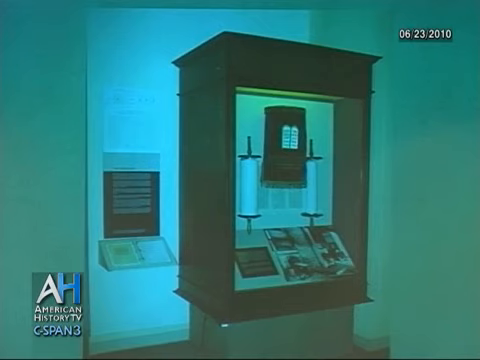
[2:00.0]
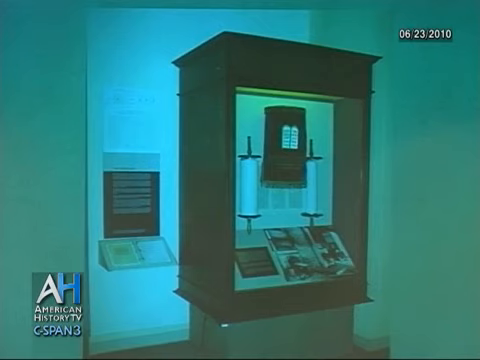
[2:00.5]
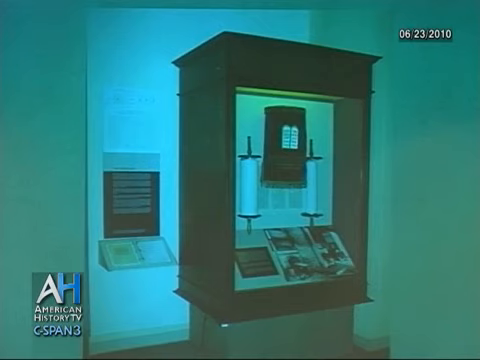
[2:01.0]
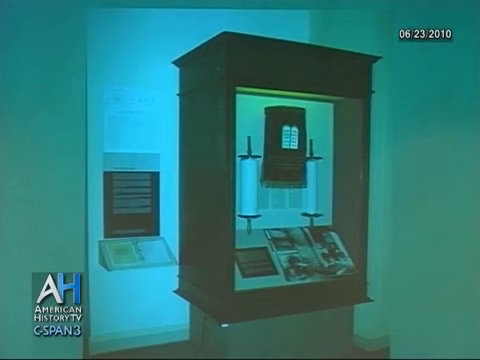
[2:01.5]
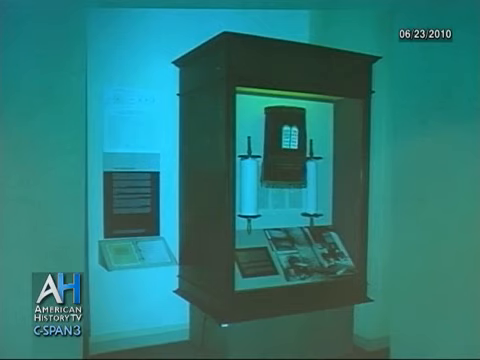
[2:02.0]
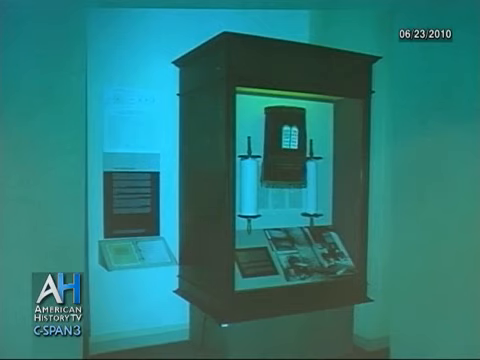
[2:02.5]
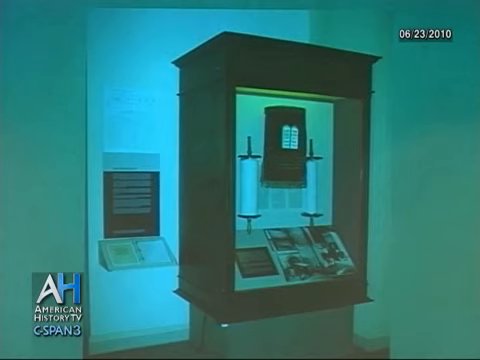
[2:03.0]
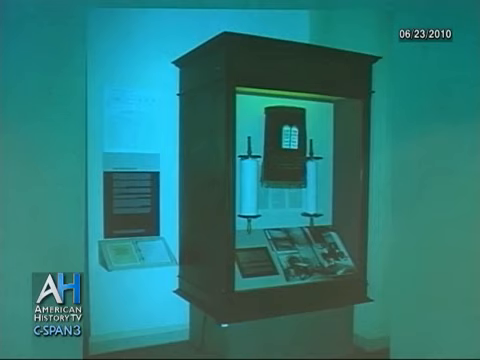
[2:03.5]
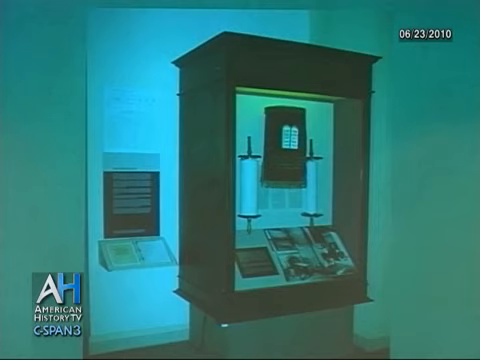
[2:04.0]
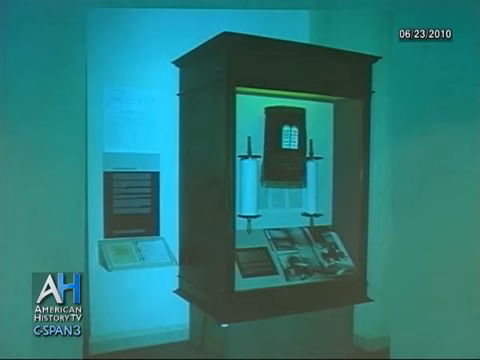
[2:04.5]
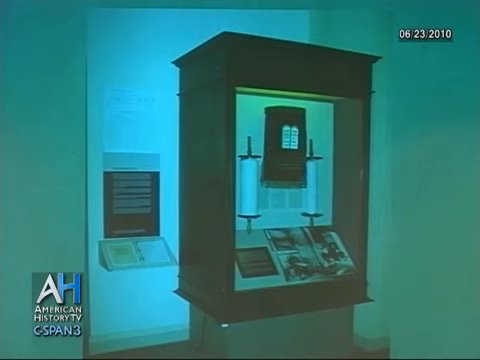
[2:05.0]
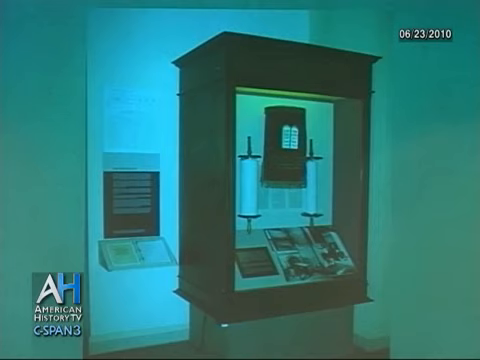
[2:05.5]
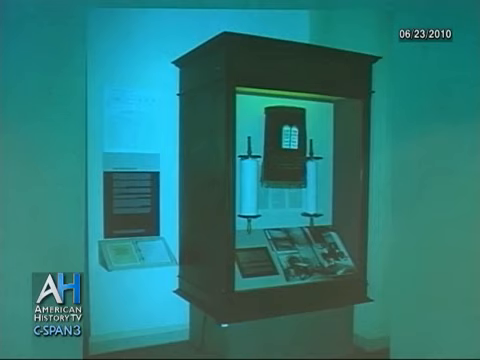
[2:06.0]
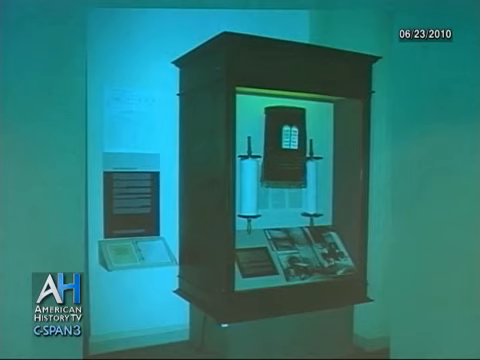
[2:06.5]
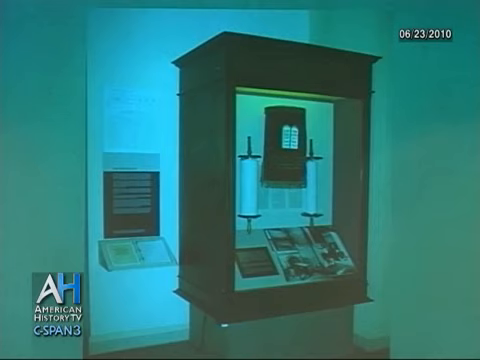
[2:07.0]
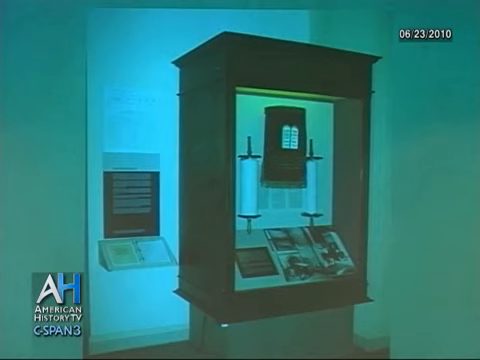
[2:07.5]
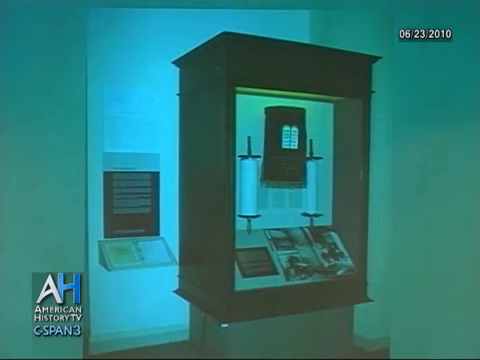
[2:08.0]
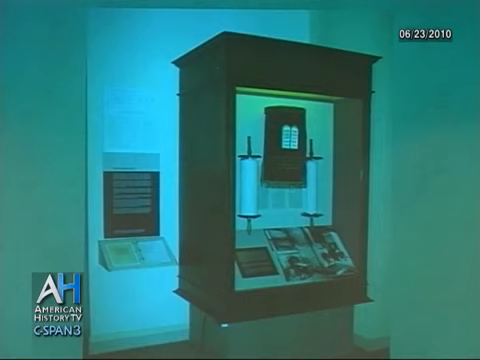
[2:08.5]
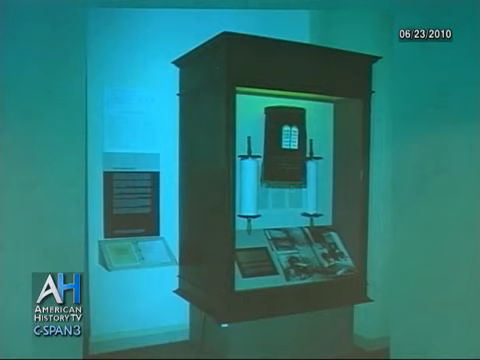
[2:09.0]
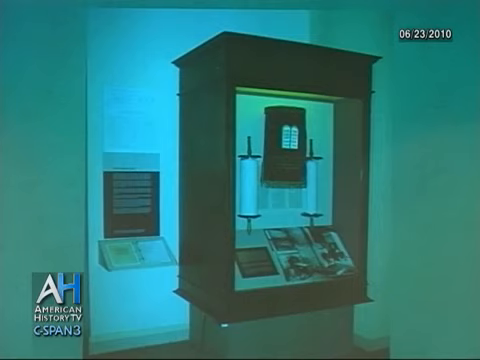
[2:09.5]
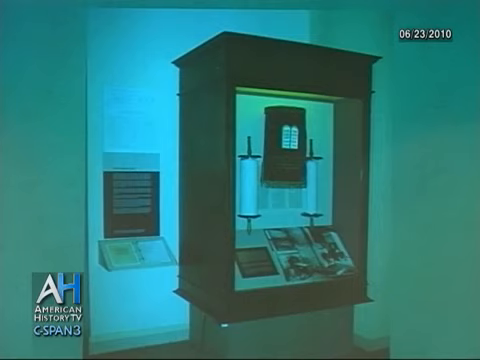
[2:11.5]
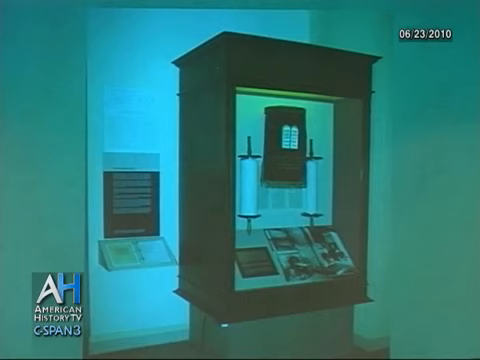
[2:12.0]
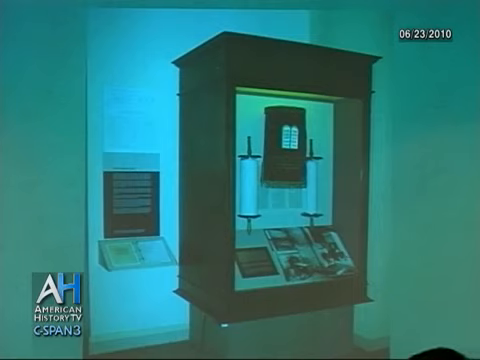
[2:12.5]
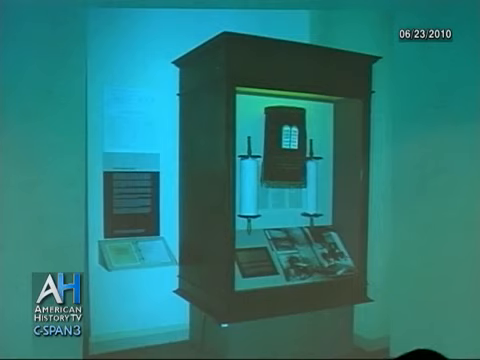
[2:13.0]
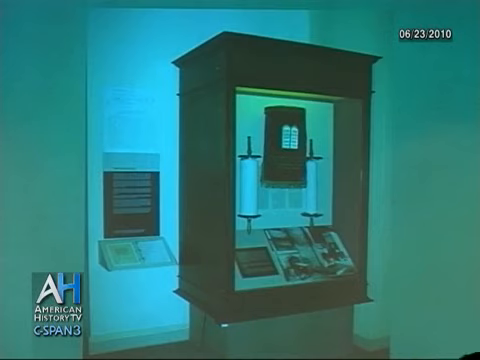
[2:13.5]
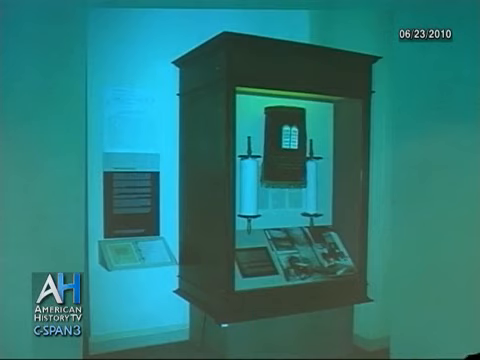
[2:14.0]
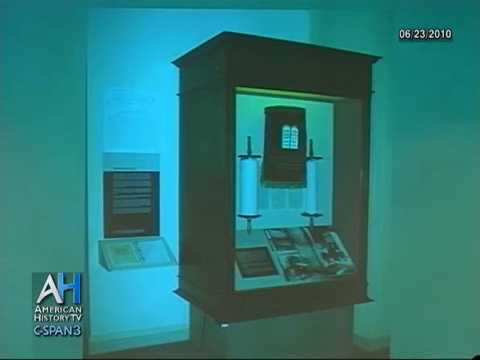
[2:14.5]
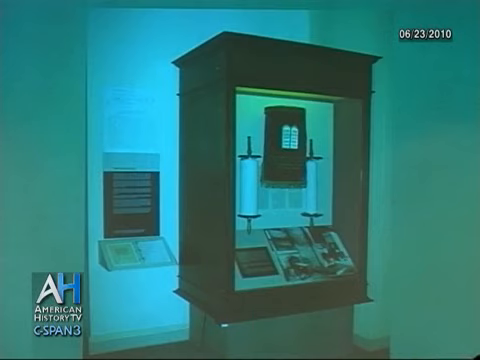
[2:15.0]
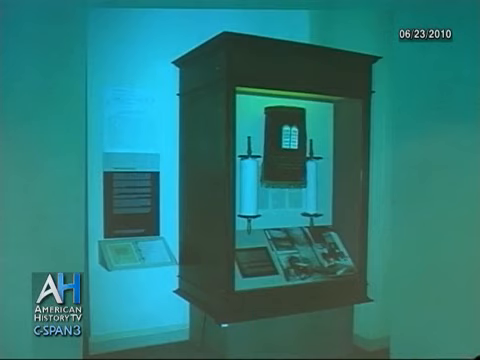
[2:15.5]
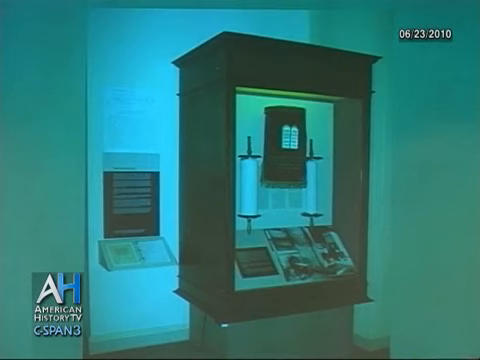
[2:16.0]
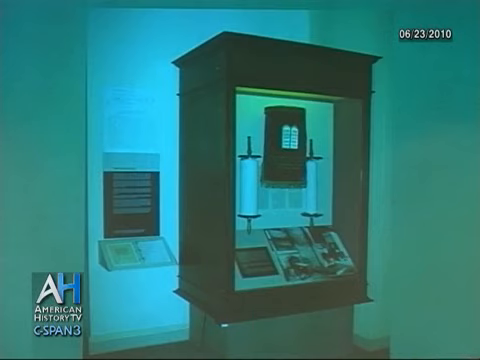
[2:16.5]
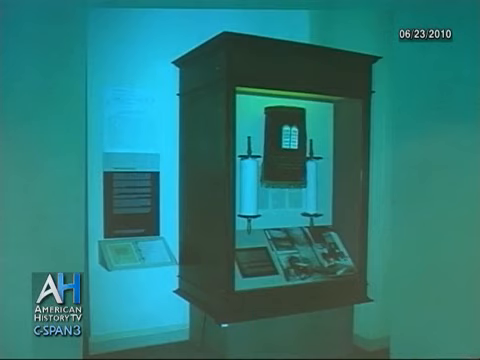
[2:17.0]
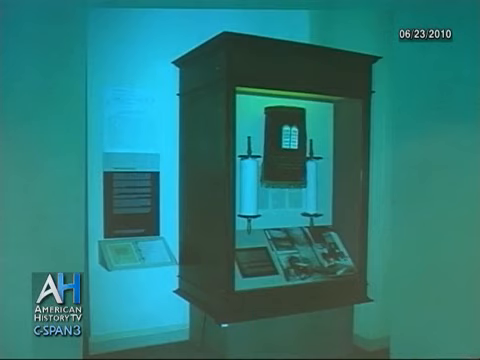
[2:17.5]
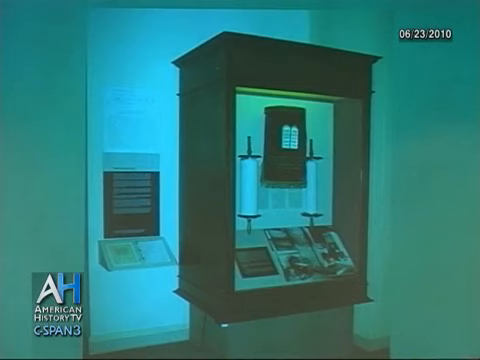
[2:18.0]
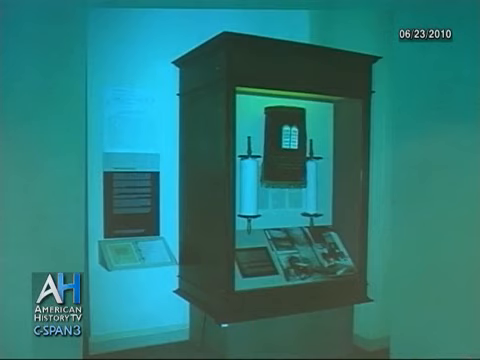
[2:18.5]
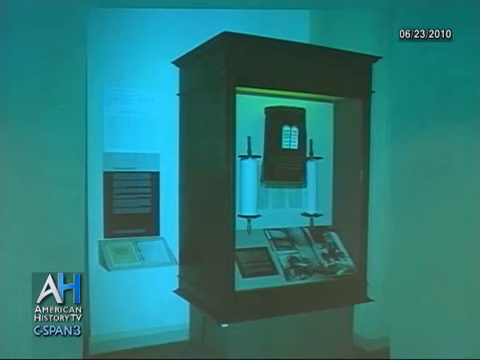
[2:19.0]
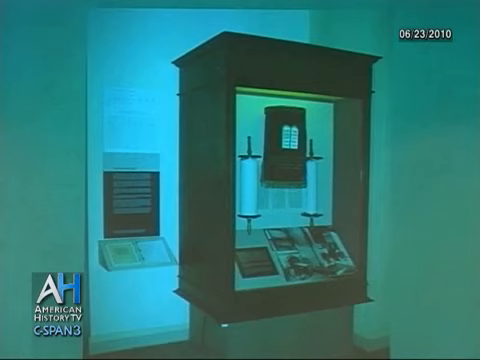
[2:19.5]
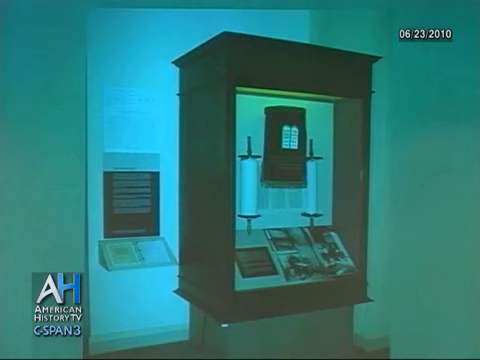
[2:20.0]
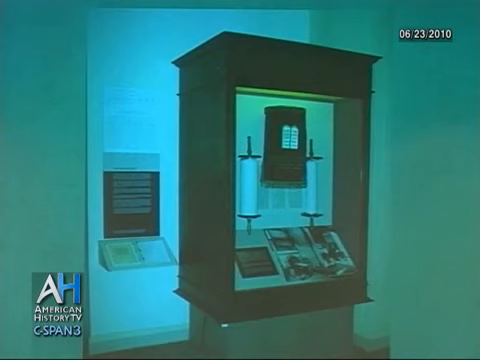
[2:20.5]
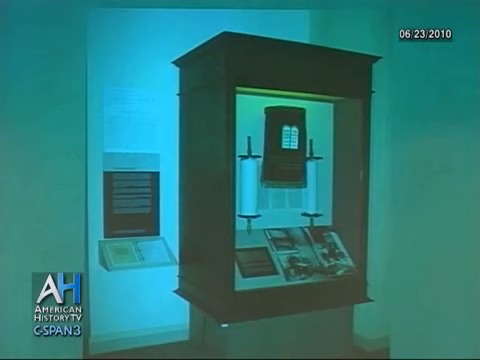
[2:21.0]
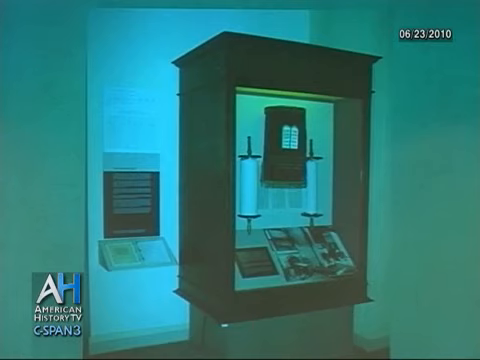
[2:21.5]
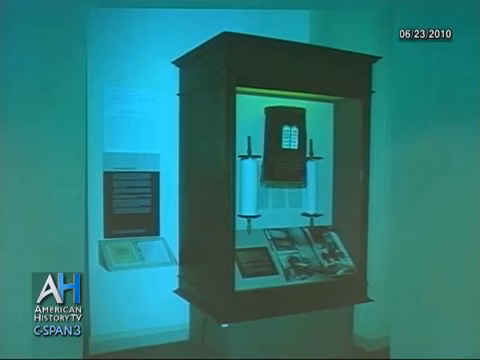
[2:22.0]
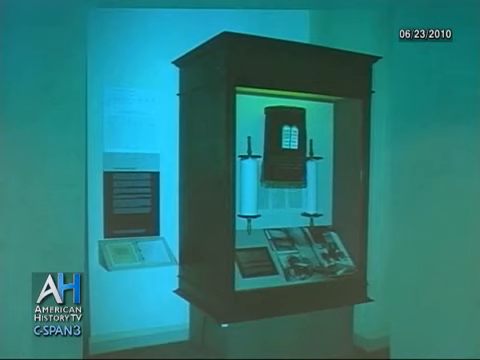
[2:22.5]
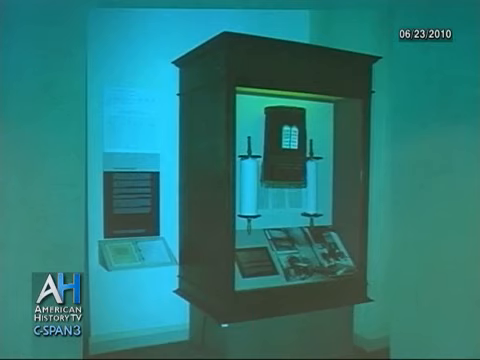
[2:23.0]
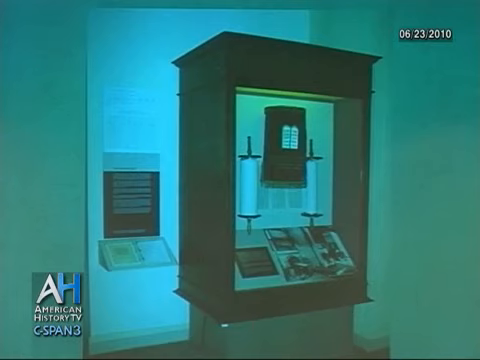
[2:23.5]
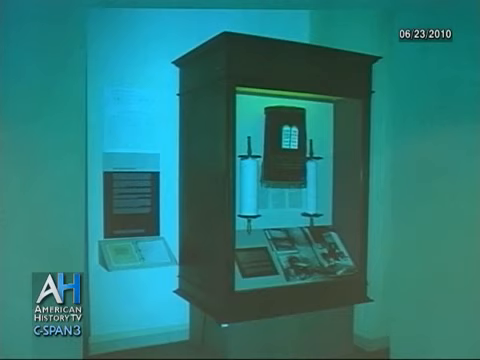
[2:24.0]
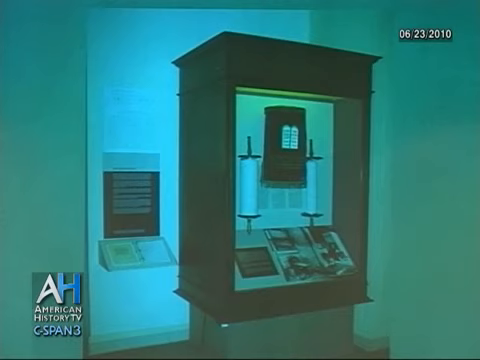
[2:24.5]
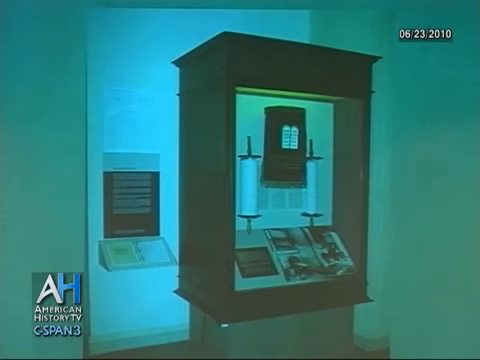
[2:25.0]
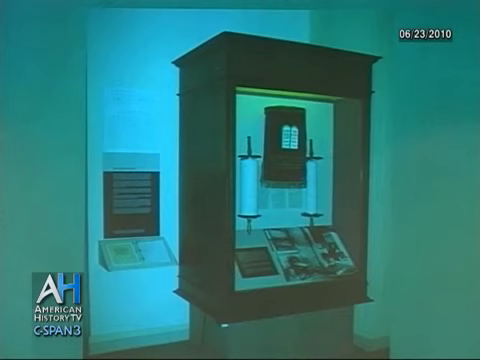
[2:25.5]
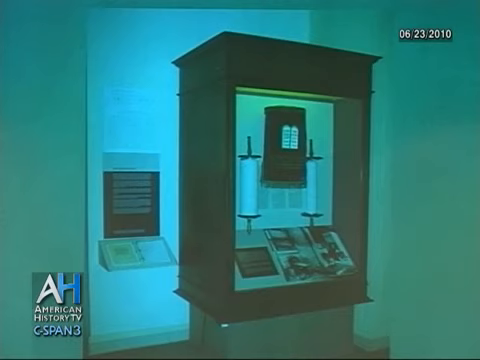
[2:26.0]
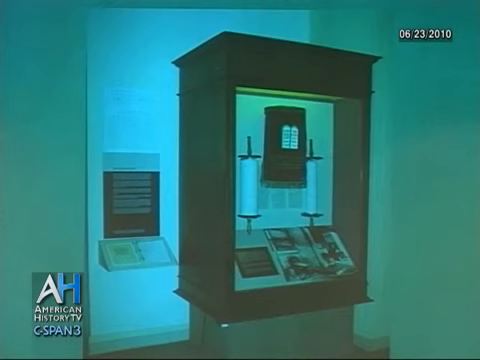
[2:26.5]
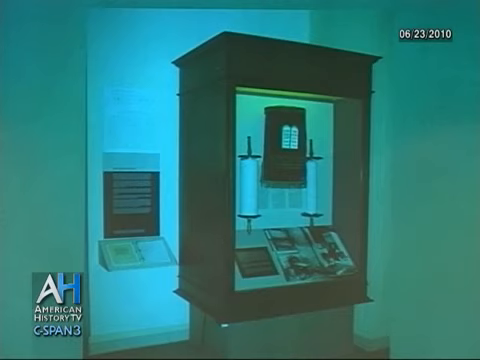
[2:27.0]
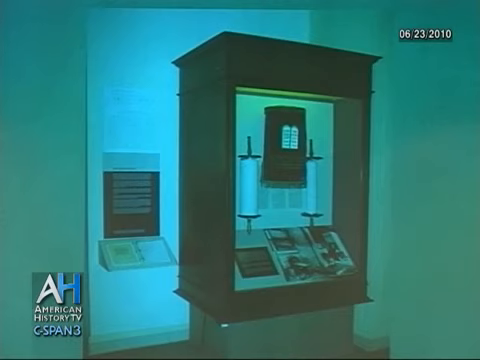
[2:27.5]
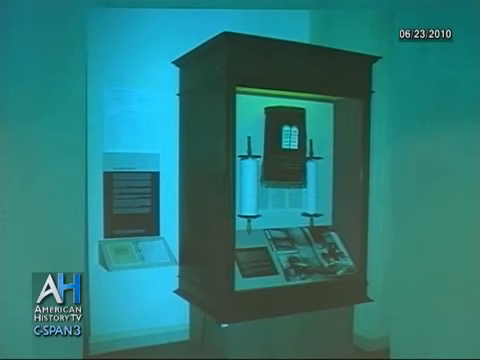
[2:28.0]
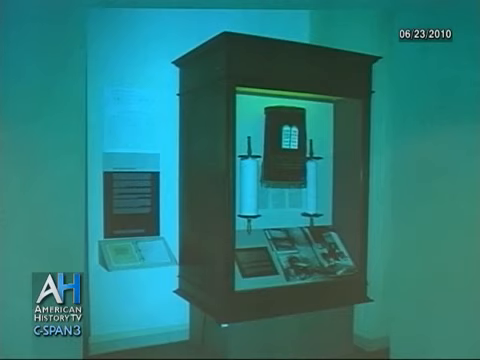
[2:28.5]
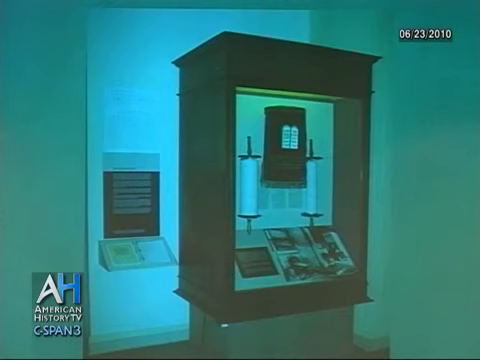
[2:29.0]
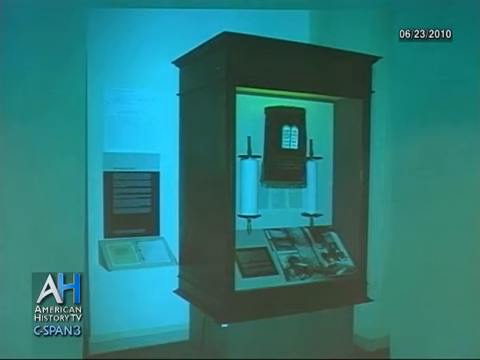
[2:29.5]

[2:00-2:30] The still image of what is apparently the library display continues. It has a glass door in front so visitors cannot touch it. The scrolls are white paper; the two sides of the scrolls are both vertical, and paper with text rolls behind, too far away to read. The whole image has an almost greenish tinge, so it may be what is being projected on the slideshow screen; the museum walls are possibly white but look tinged green. The image is static. The American History TV logo is still in the lower left and the date, 2010, in the upper right. For a brief moment in the lower right of the image, the top of someone's head leans left into the frame a tiny sliver and then pulls back, apparently an audience member's head, indicating the shot is taken from sort of behind the audience. Otherwise the image is completely static.